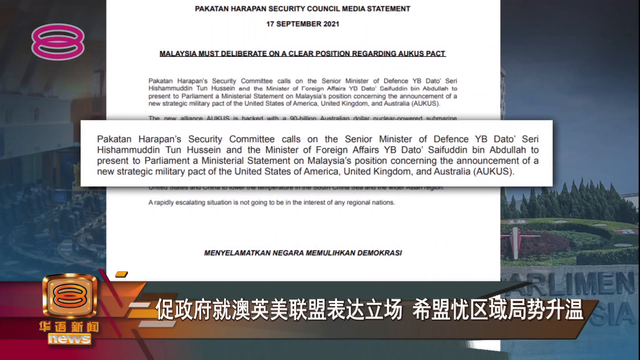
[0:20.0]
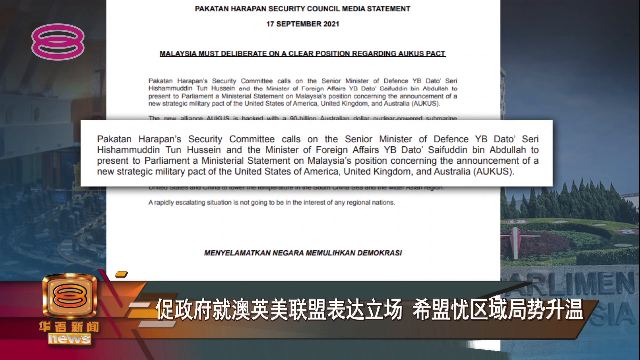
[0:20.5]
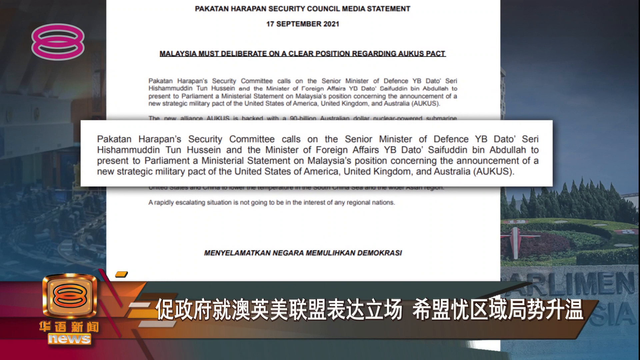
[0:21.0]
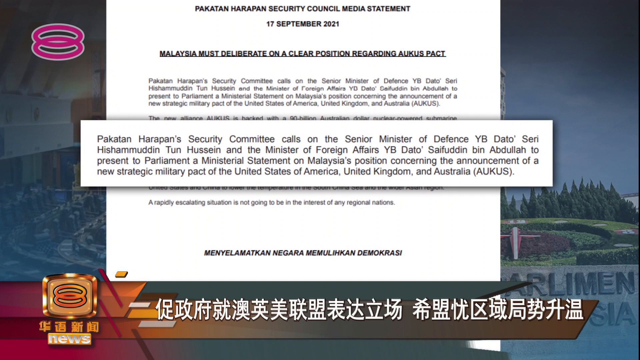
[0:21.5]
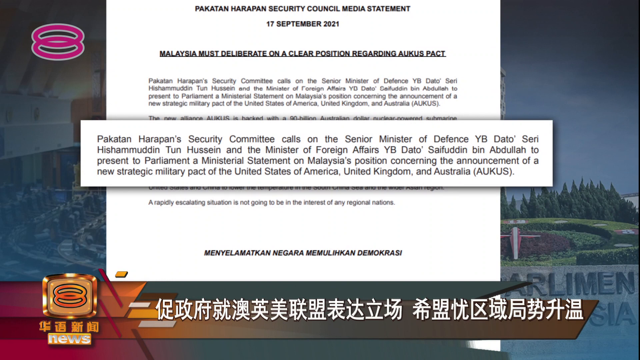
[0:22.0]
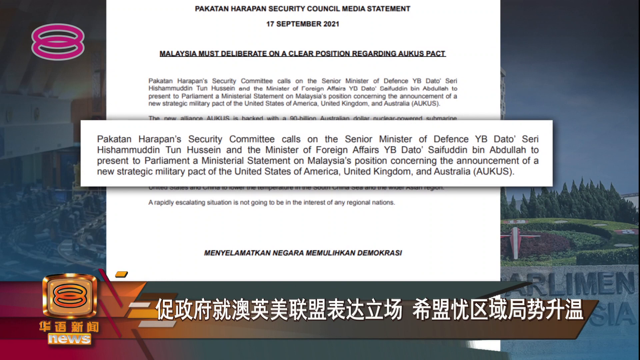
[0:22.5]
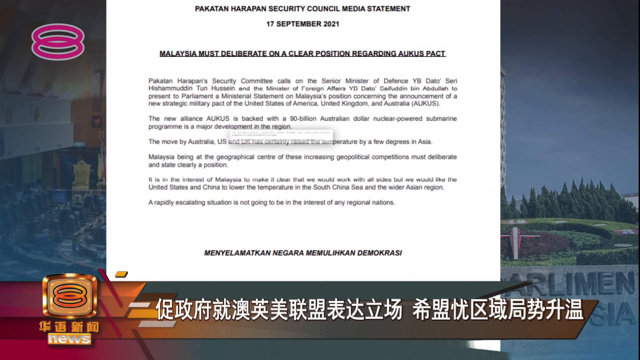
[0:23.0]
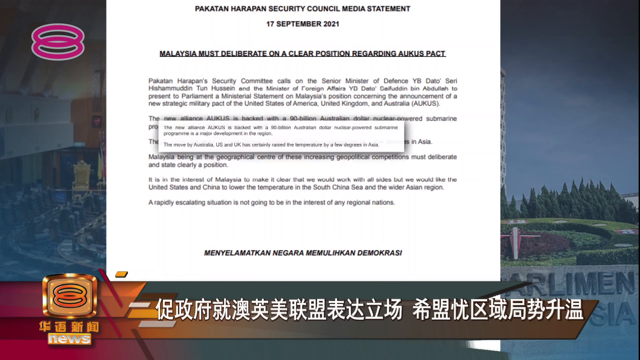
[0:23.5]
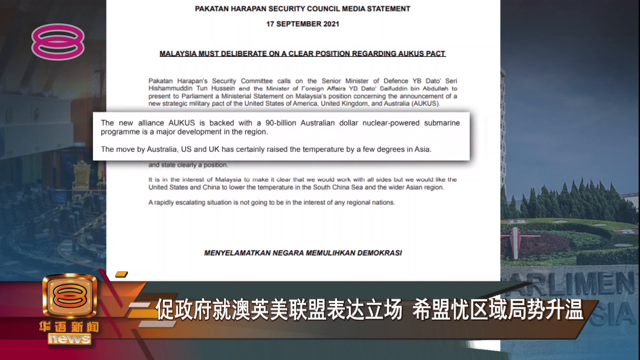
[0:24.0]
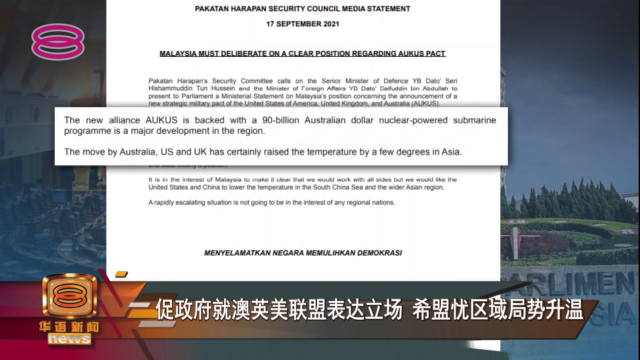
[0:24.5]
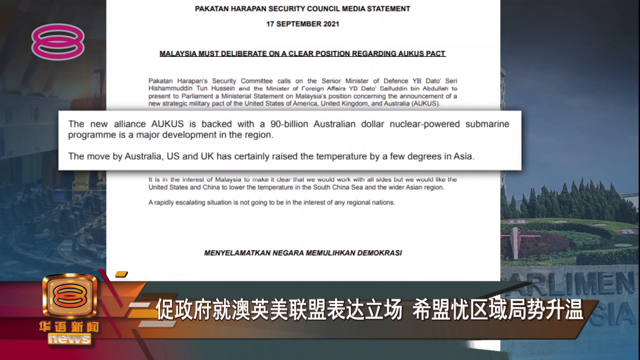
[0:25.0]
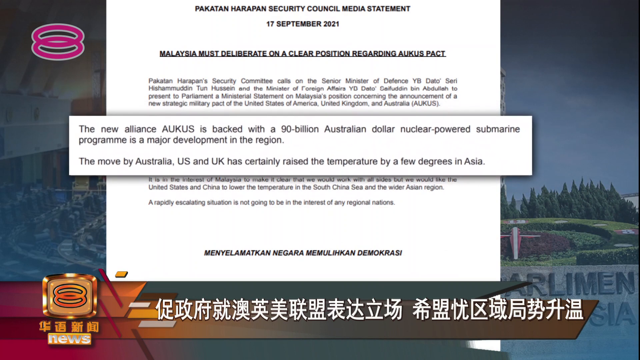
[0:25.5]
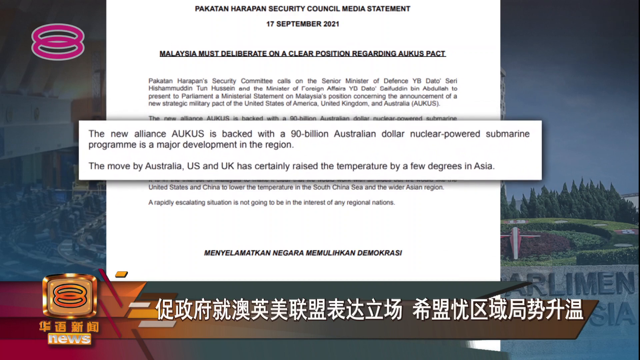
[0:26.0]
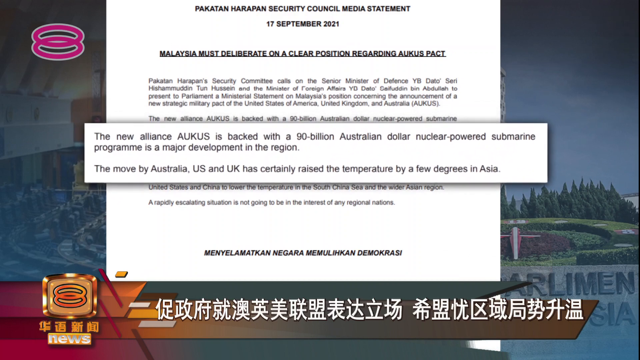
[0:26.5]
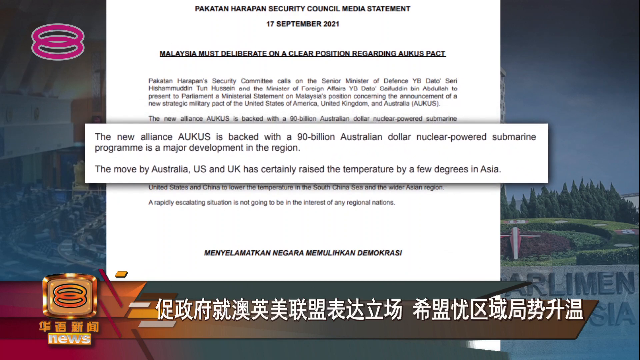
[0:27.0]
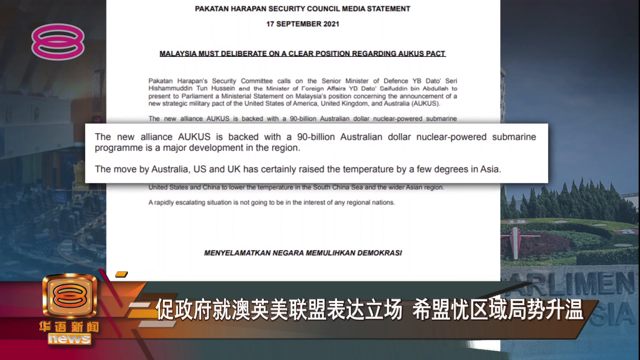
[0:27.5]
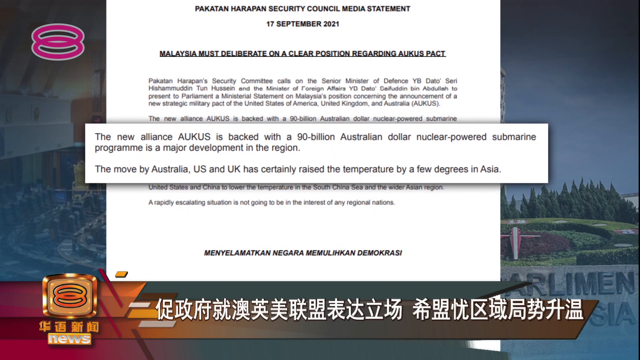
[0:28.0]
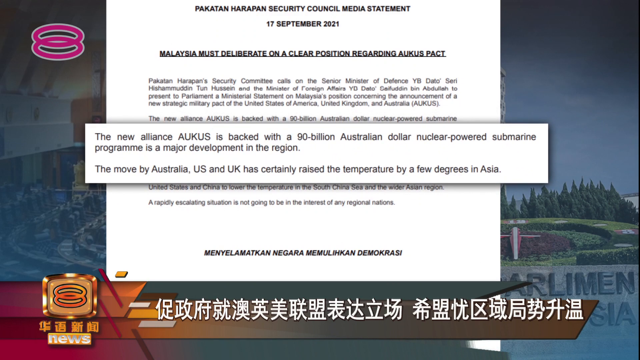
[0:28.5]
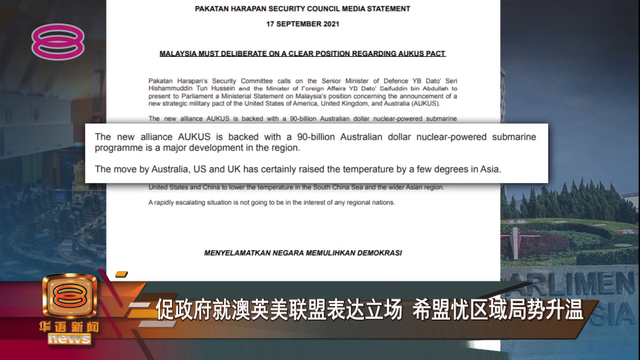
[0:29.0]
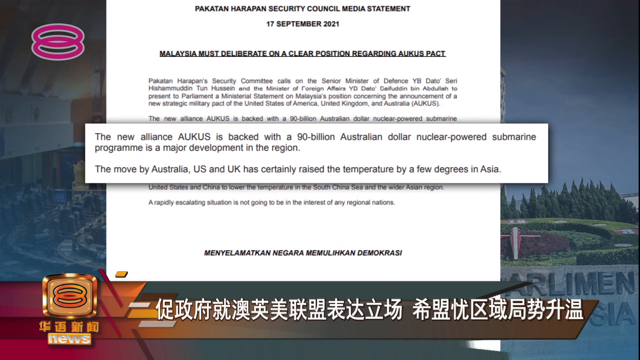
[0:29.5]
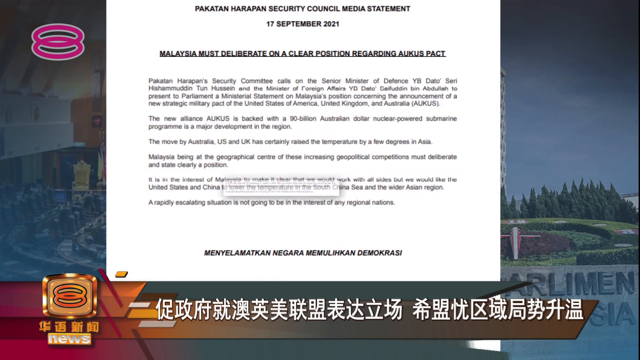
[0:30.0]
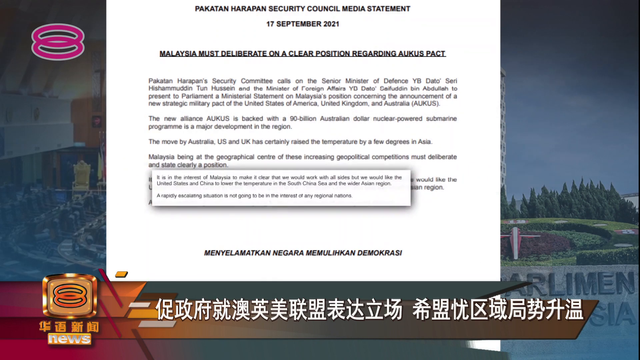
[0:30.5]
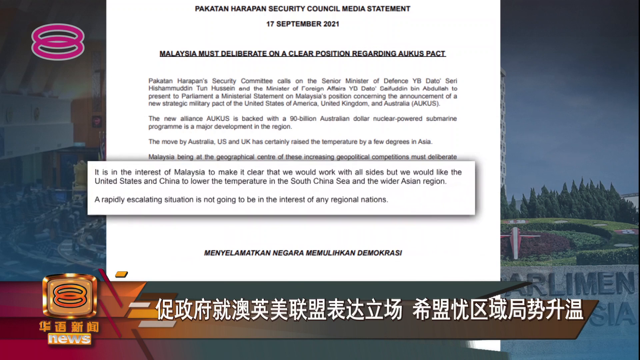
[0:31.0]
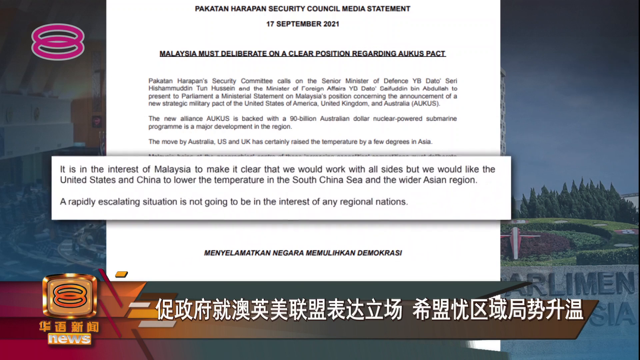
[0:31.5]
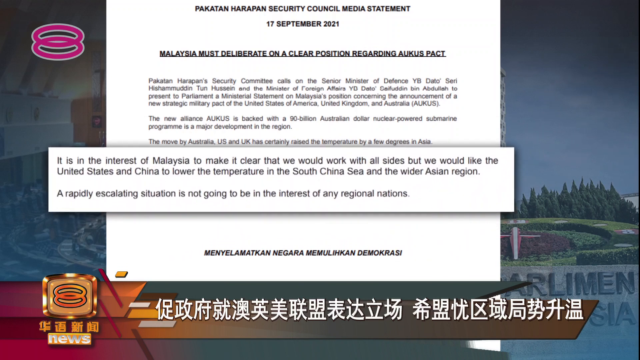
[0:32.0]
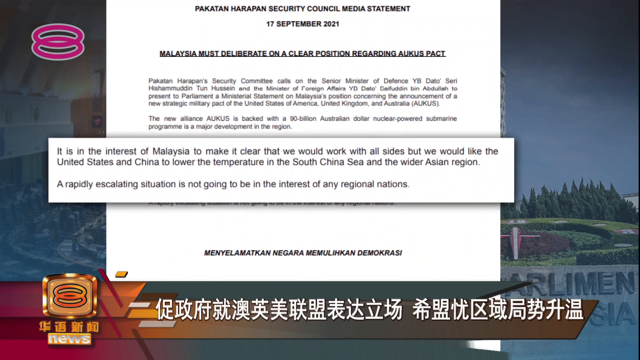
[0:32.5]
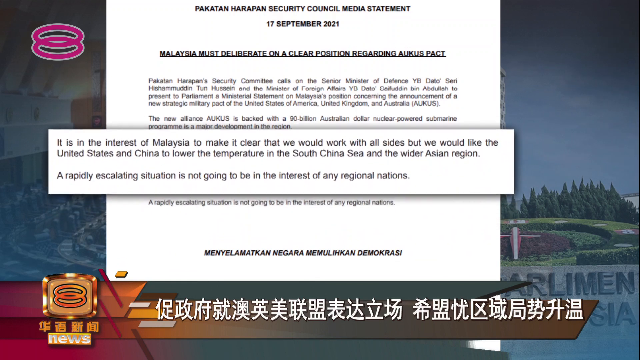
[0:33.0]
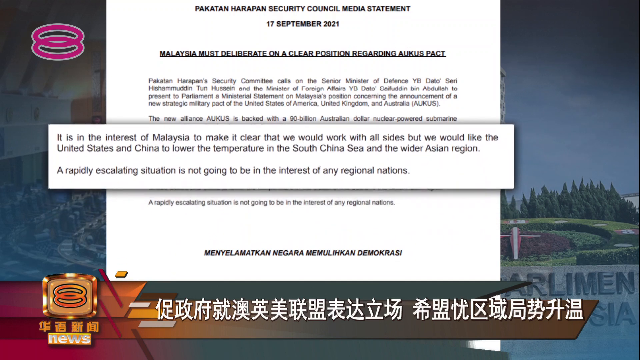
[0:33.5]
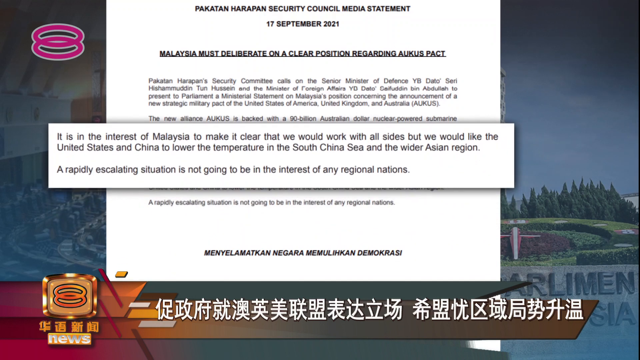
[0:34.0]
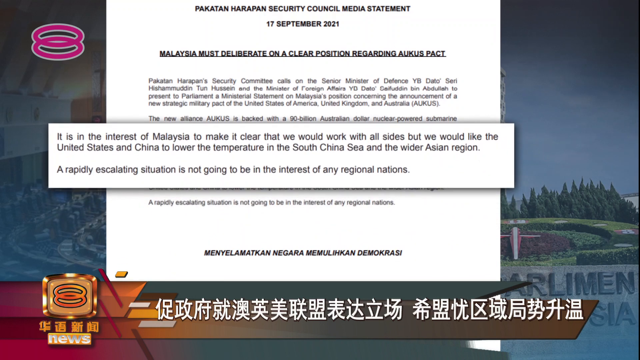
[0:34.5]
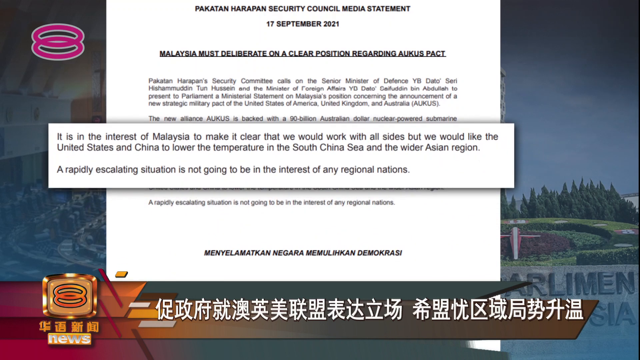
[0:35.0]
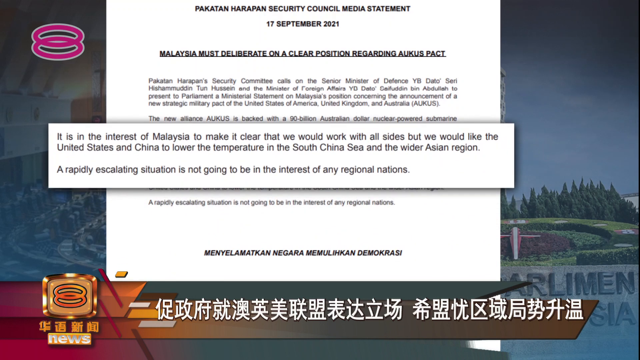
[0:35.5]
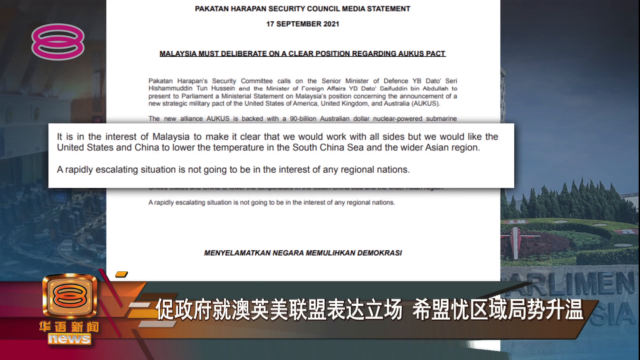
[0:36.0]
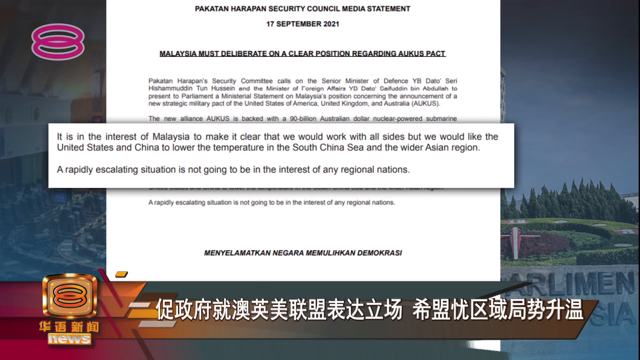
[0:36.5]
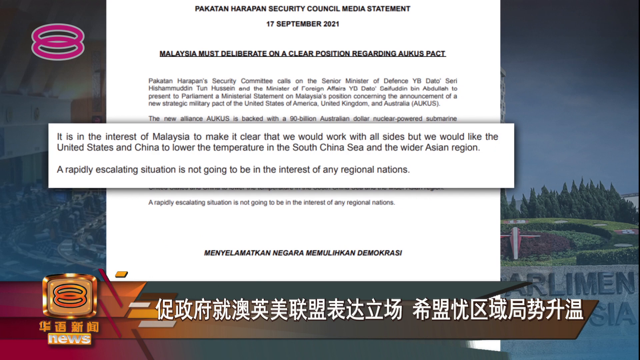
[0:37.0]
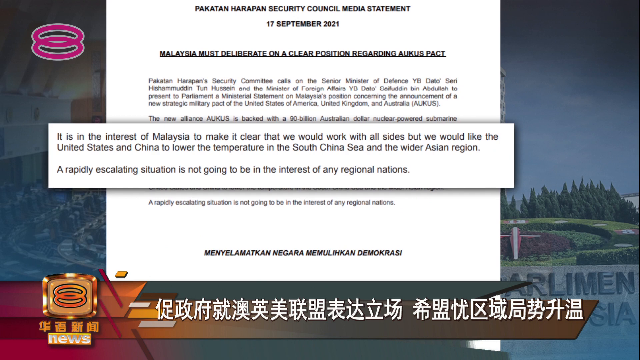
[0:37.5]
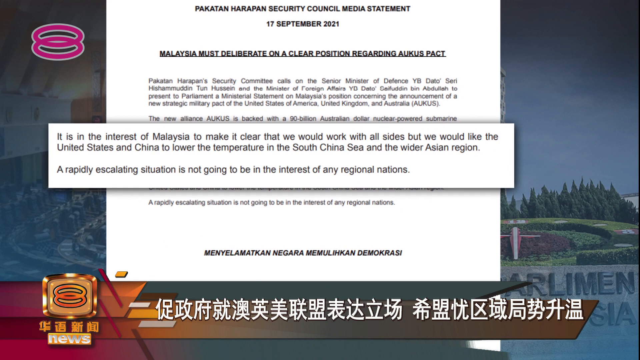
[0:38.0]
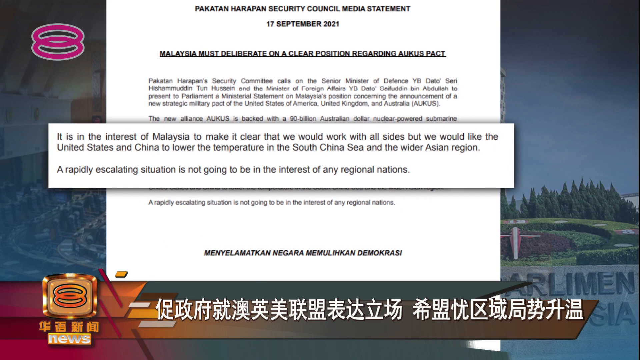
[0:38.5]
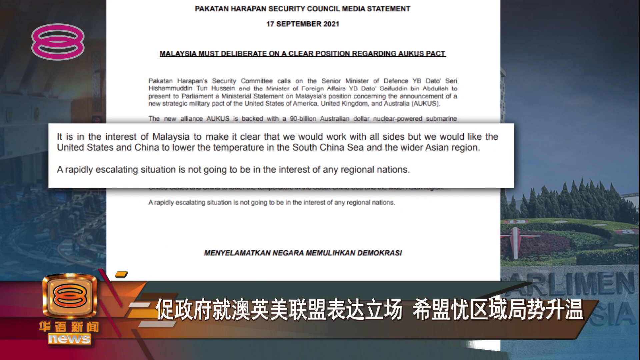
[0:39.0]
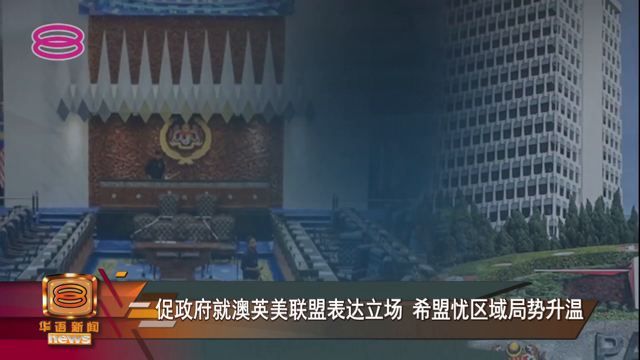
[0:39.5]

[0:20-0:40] In the middle of the newscast, a piece of paper is put onto the screen. Its text is somewhat hard to read, so some of it is superimposed, reading: "the new alliance, AUKUS, is backed with a 90 billion Australian dollar nuclear-powered submarine program is a major development in the region. The move by Australia, U.S. and U.K. has certainly raised the temperature by a few degrees in Asia."